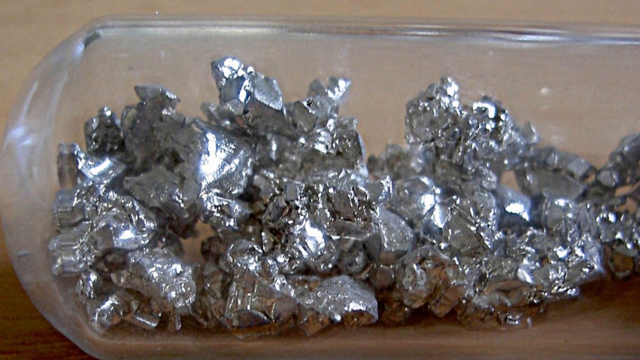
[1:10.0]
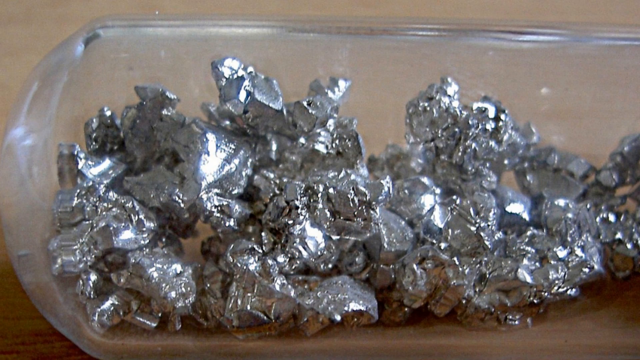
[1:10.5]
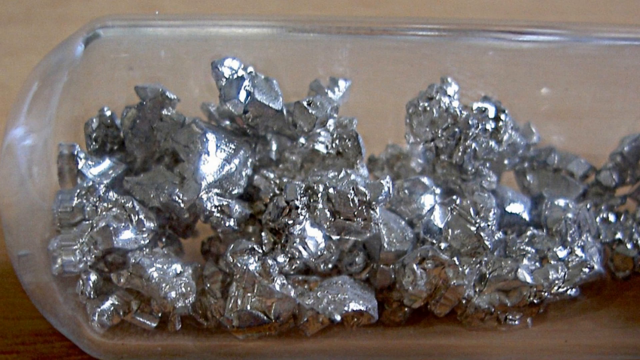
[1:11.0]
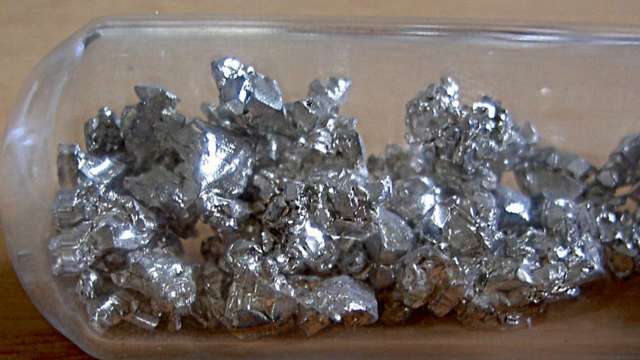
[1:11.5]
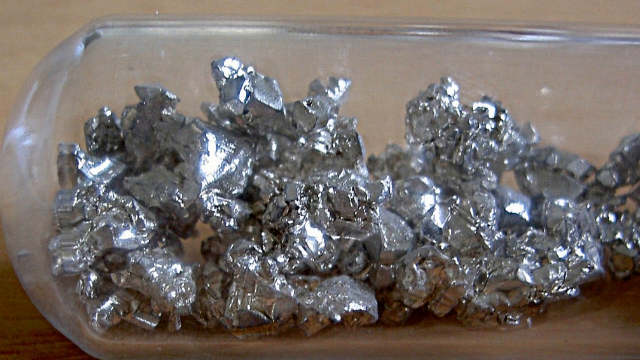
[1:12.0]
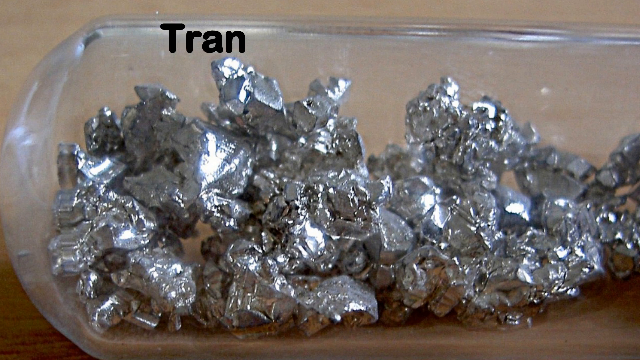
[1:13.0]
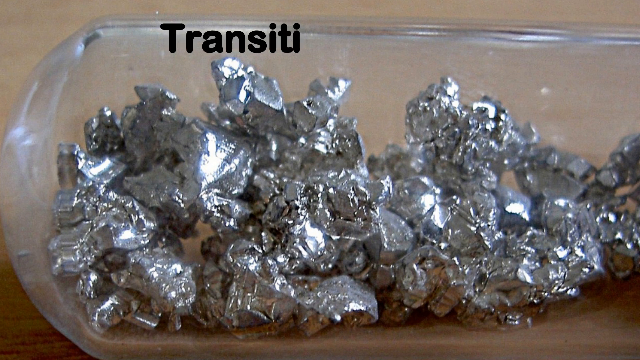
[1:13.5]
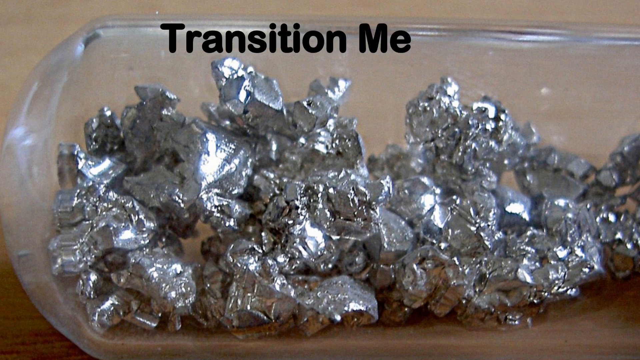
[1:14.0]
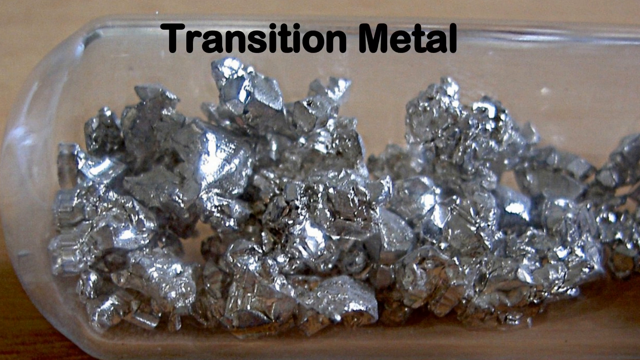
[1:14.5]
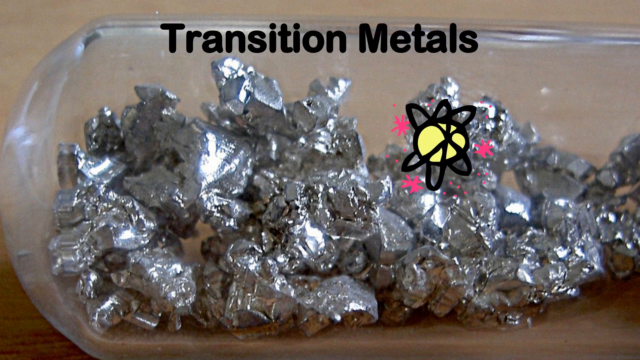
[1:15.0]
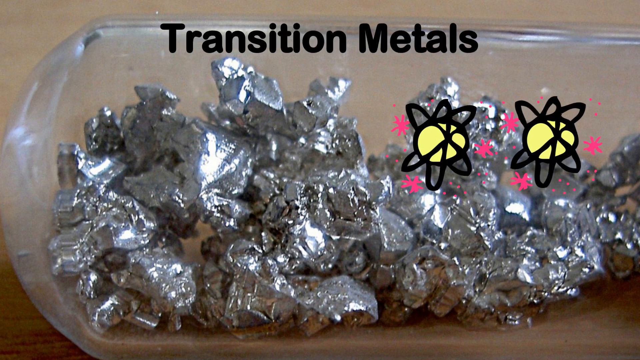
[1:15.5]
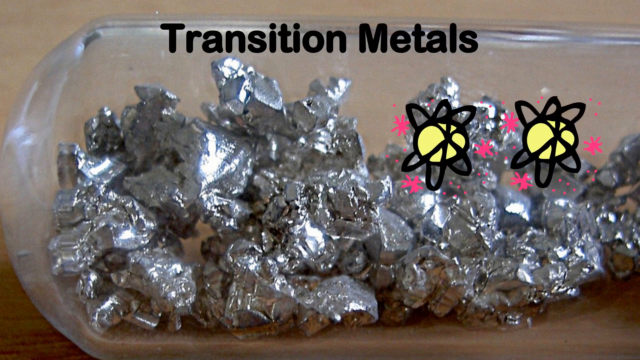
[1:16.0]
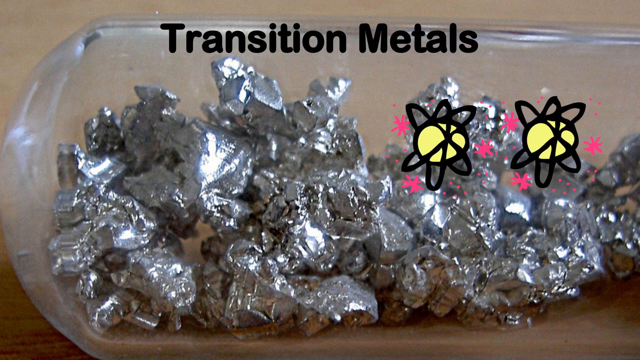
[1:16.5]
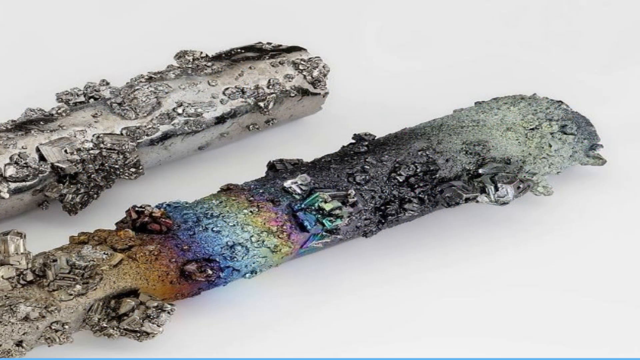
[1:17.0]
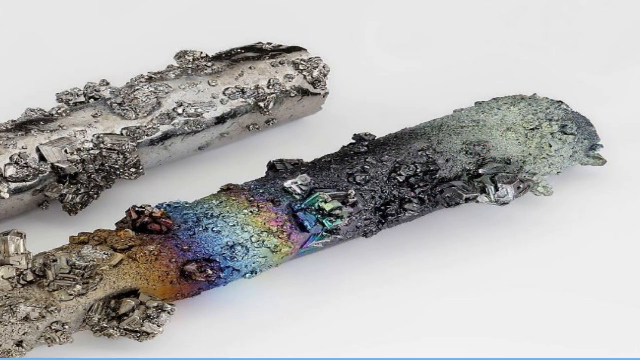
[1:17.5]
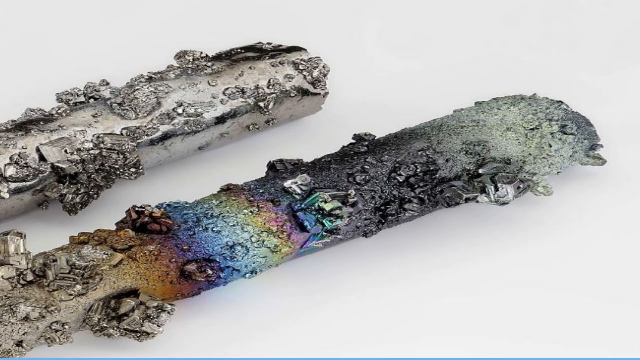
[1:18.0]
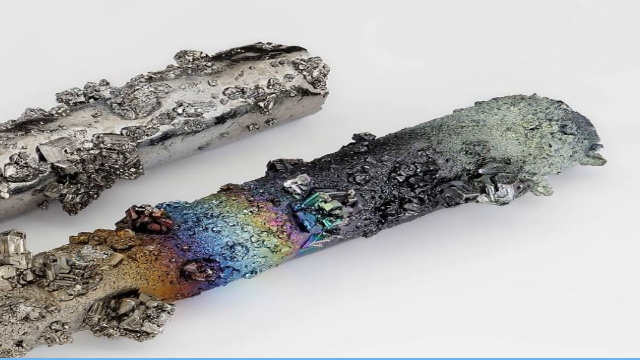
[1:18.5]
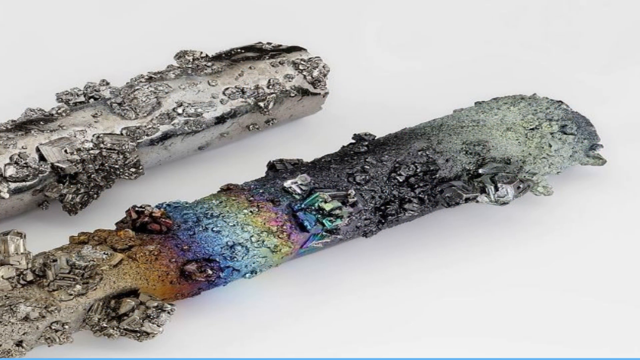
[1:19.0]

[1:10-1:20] The silver rocks remain on screen, still showing only the top left of the container. Sort of bubbly black text appears at the top reading "transition metals." Toward the top right, two symbols pop up that look exactly the same: they have a sort of neutron-like pattern of crisscrossing lines with a yellow center, and red stars surround them. The symbols stay static. The video then transitions to another picture.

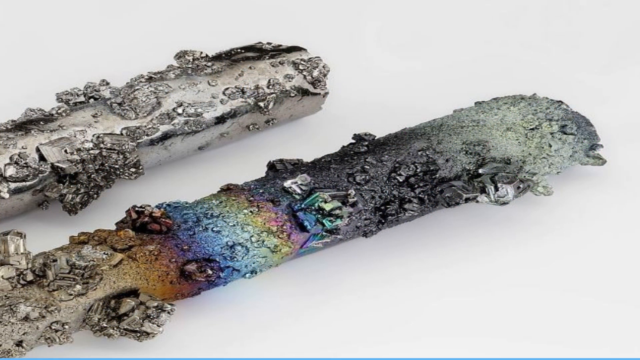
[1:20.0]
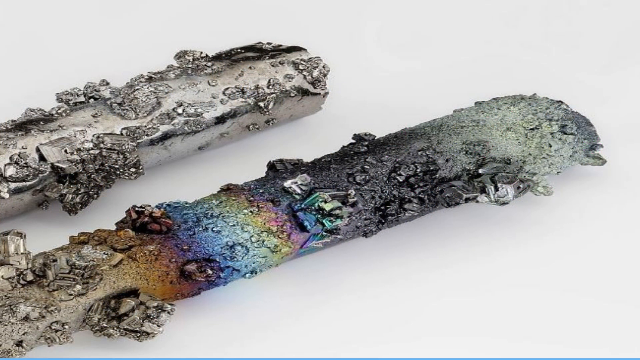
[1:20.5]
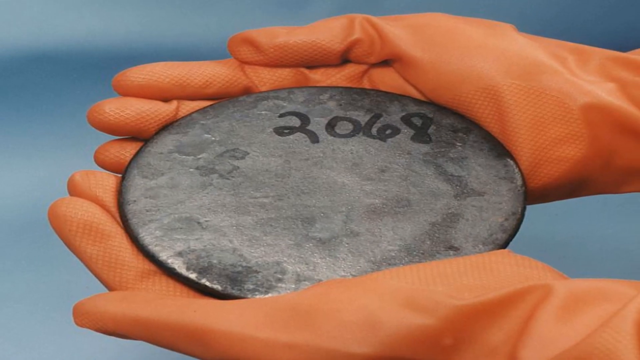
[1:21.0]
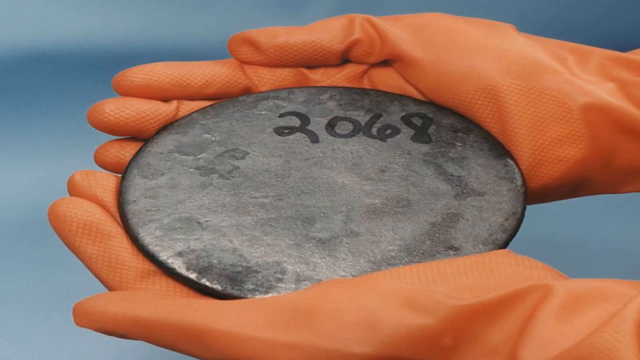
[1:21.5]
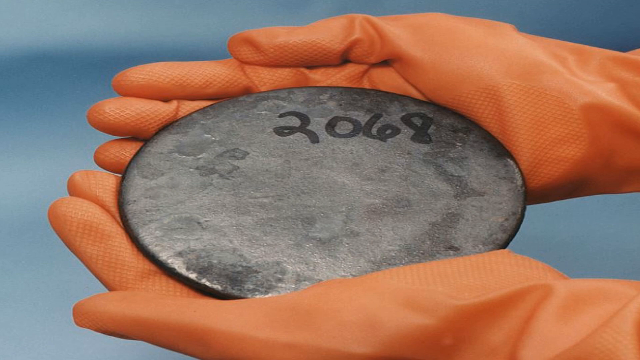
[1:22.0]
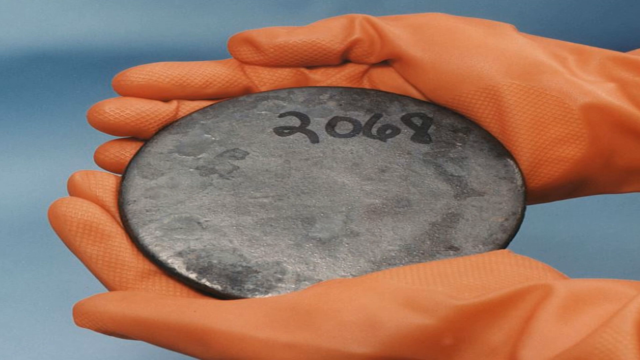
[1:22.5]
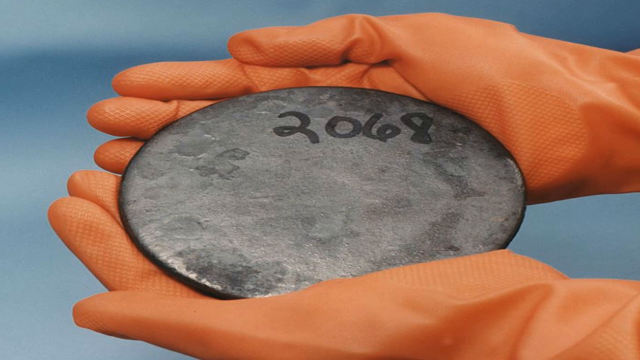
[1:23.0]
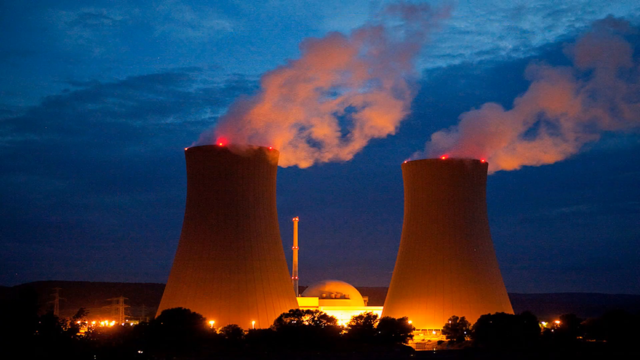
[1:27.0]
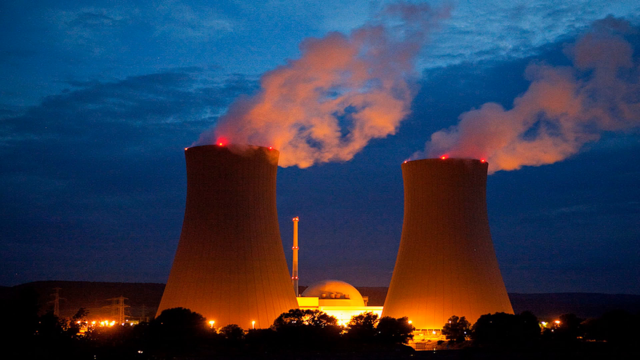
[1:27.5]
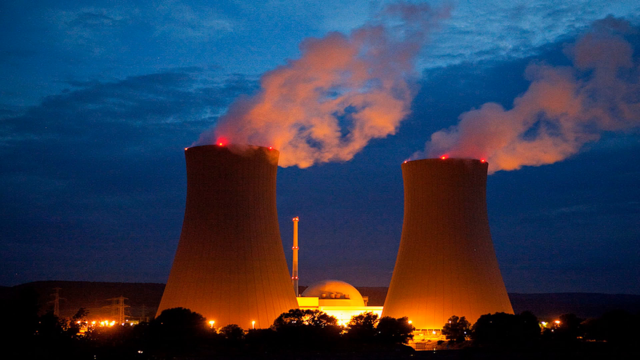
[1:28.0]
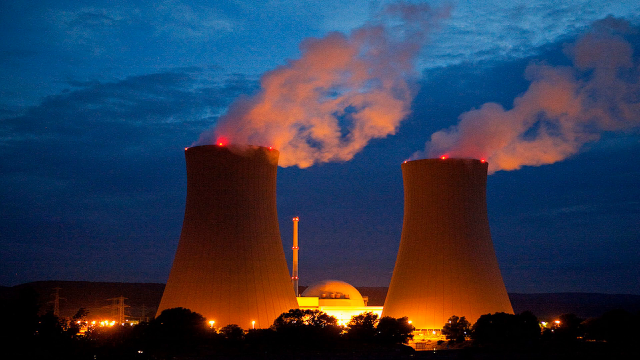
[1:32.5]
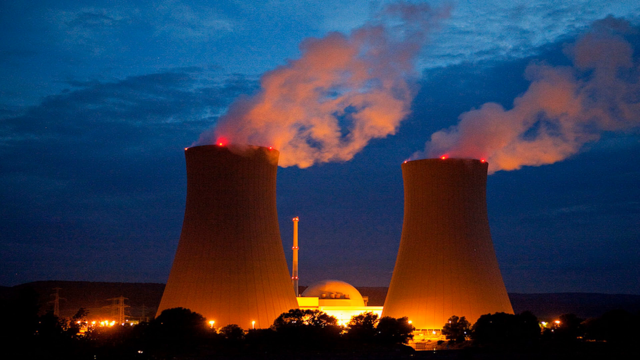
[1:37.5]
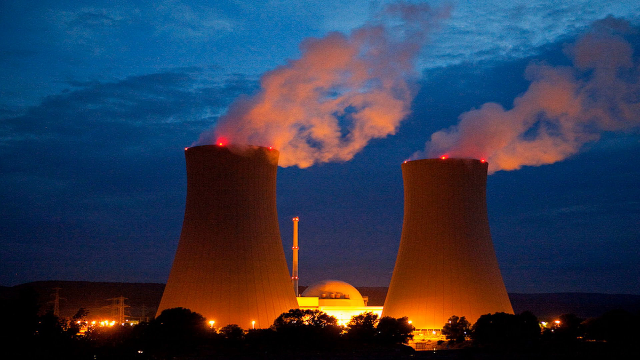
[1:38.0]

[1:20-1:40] A picture shows some sort of wooden logs with different light on them. The top log looks more metallic silver, apparently made of the same silver rock seen in the plastic container, while the bottom one looks made of different ones. From left to right, the leftmost part looks kind of like a brownish hue of the silver; further along it becomes much more dark brown, then briefly a weird rainbow color, almost like a rainbow scale; then it returns to a silver color that is much darker and black looking; and at the far right it has a very soily, dirty, ashy look. The video then cuts to someone holding up some sort of metal formed into a circle with the number 2068 on it. Next comes a picture of what is basically a power plant.